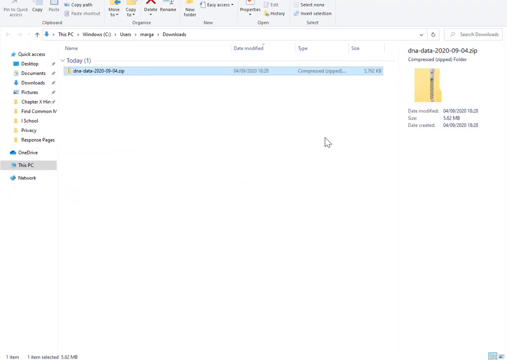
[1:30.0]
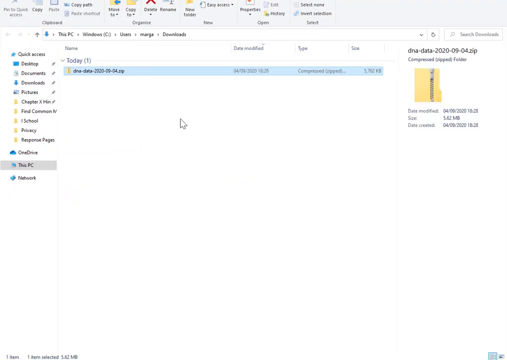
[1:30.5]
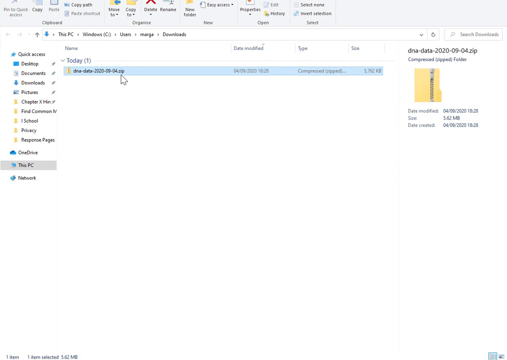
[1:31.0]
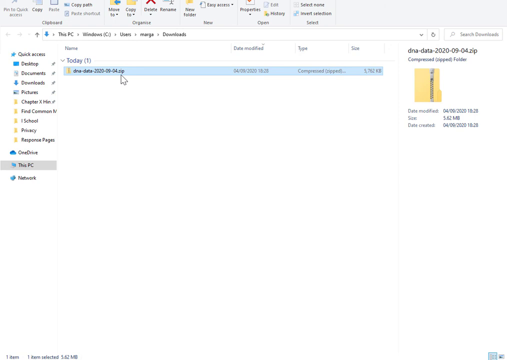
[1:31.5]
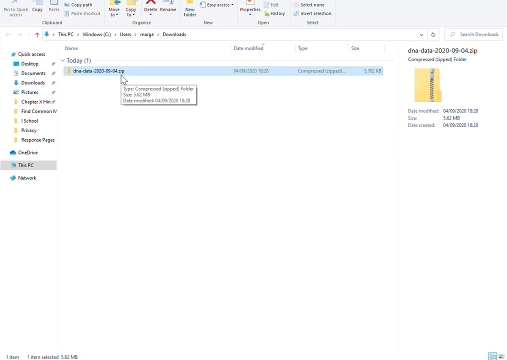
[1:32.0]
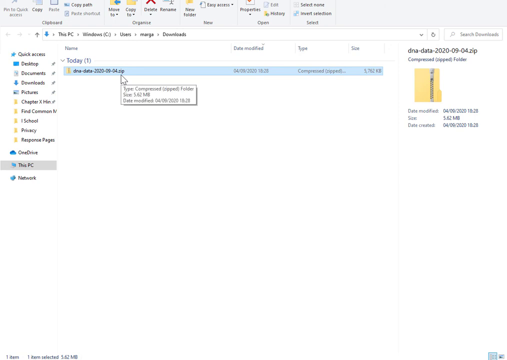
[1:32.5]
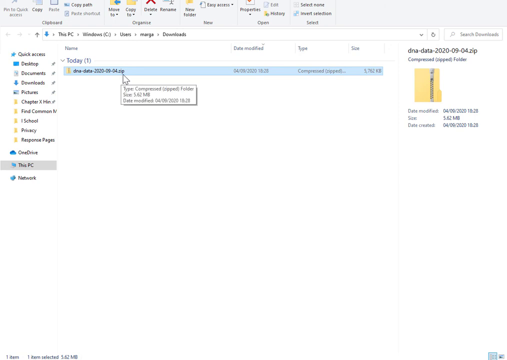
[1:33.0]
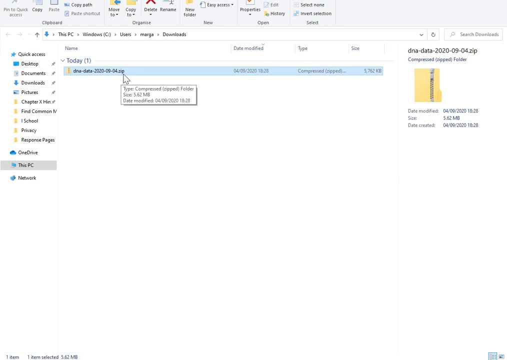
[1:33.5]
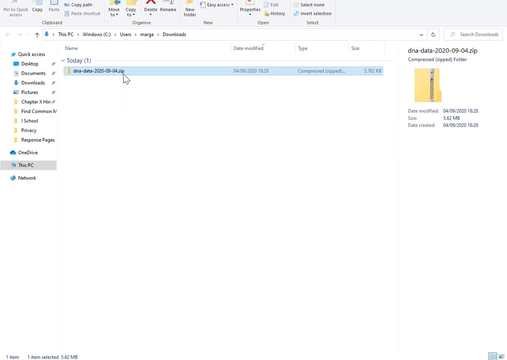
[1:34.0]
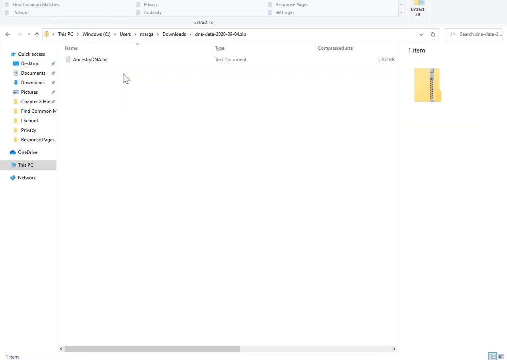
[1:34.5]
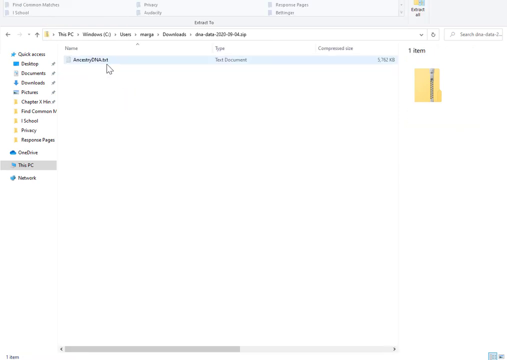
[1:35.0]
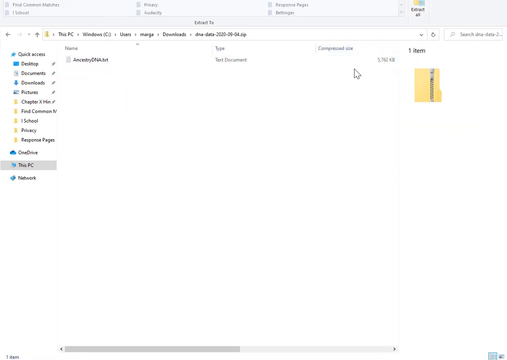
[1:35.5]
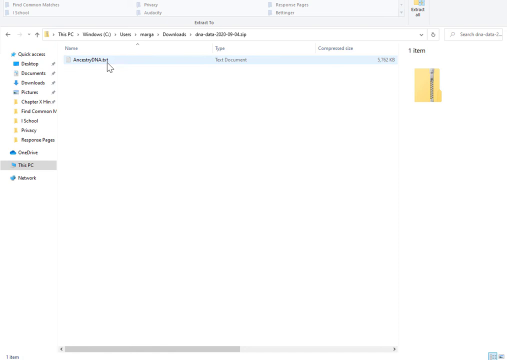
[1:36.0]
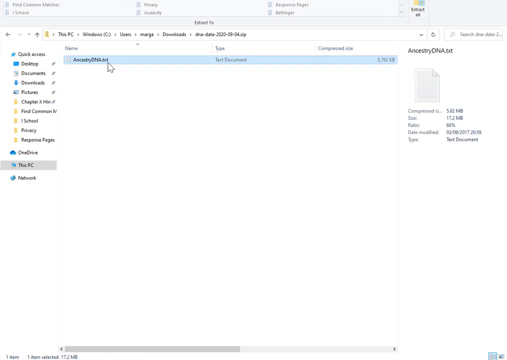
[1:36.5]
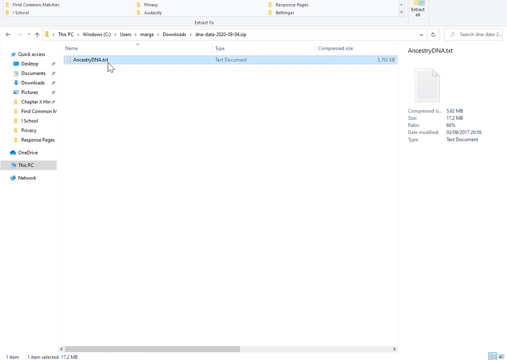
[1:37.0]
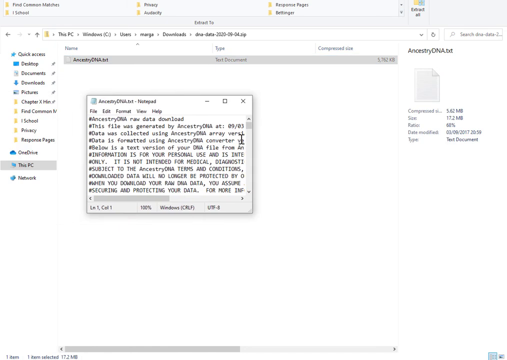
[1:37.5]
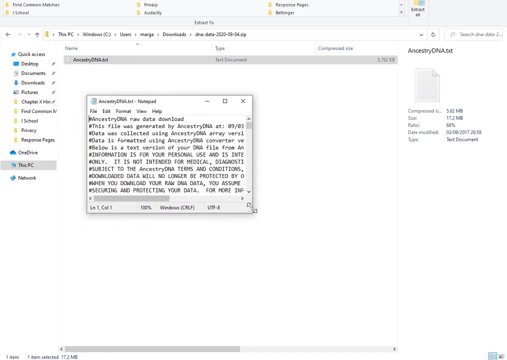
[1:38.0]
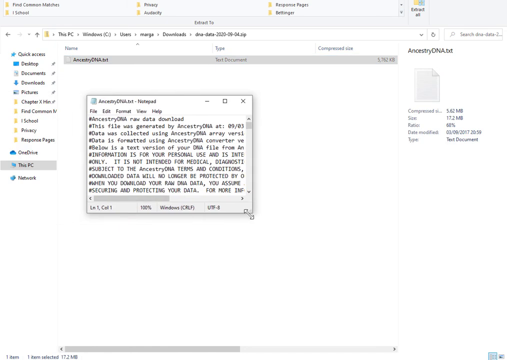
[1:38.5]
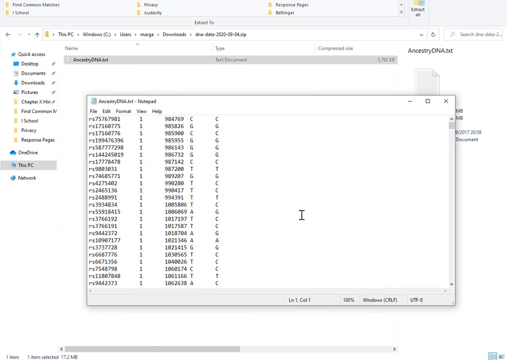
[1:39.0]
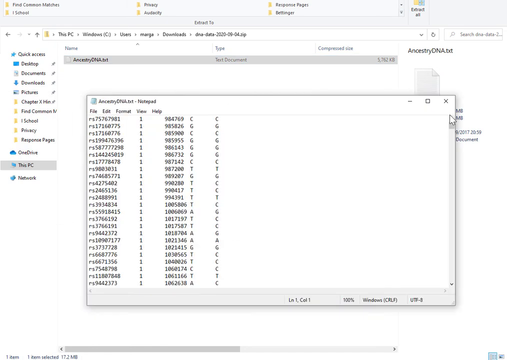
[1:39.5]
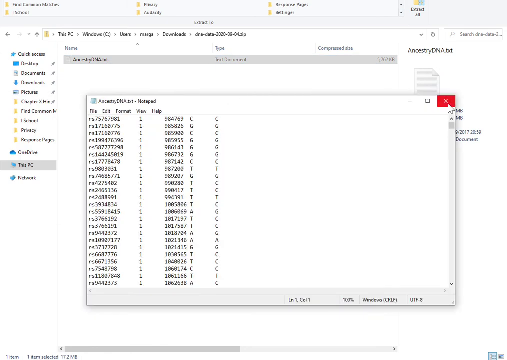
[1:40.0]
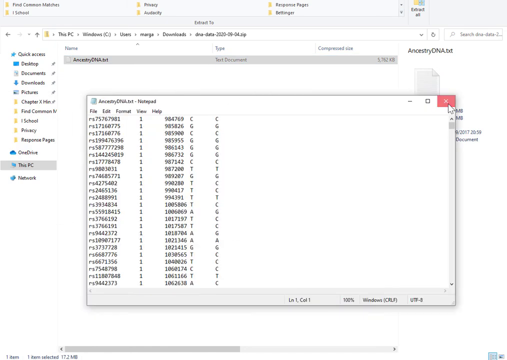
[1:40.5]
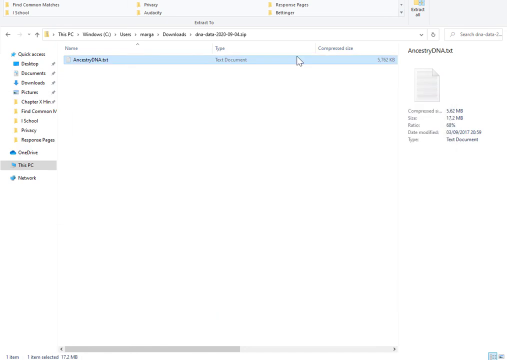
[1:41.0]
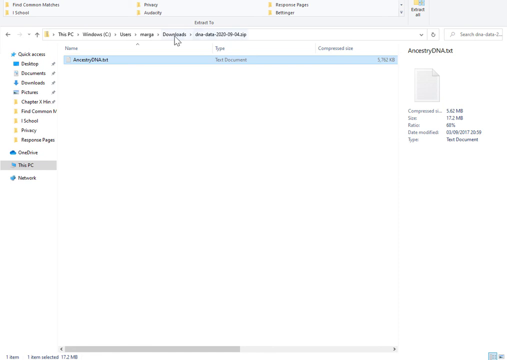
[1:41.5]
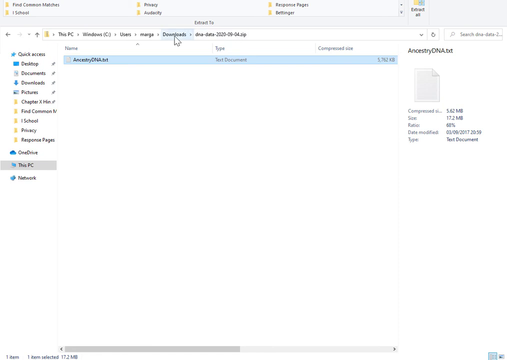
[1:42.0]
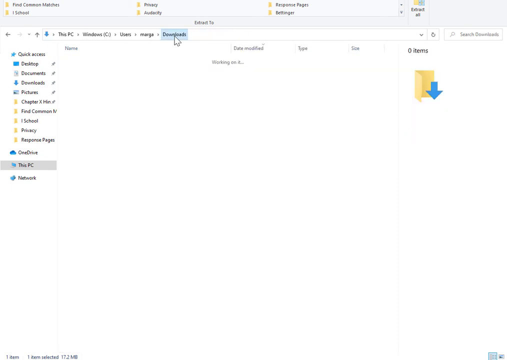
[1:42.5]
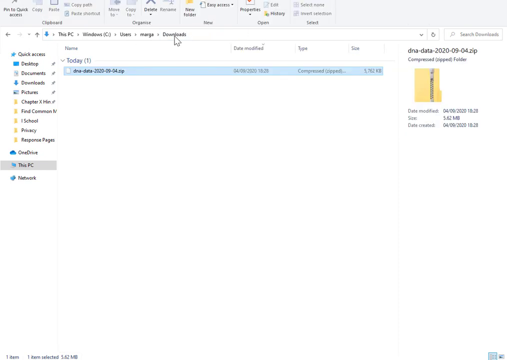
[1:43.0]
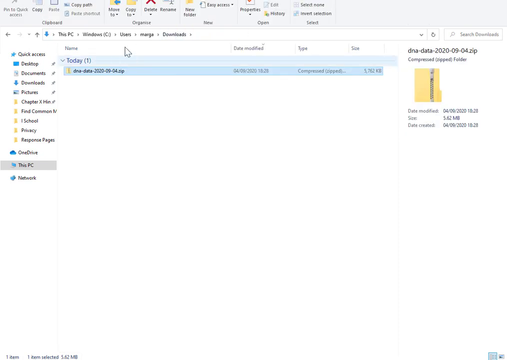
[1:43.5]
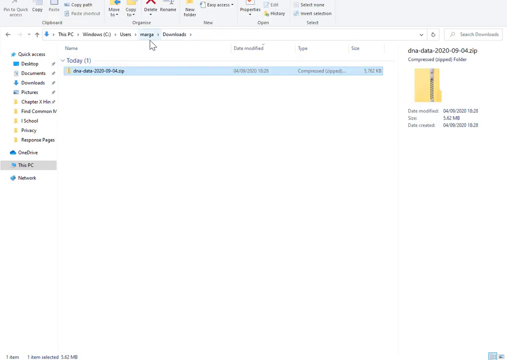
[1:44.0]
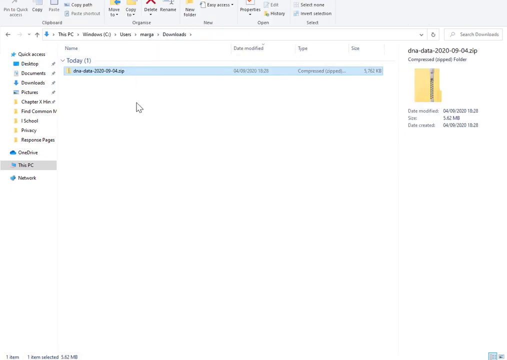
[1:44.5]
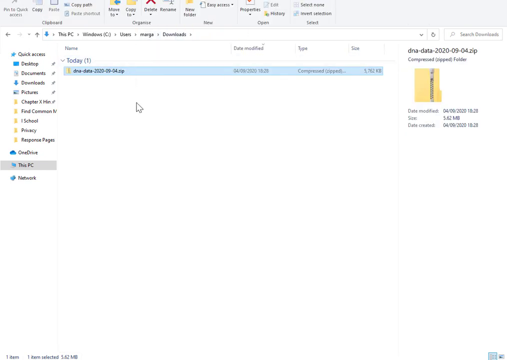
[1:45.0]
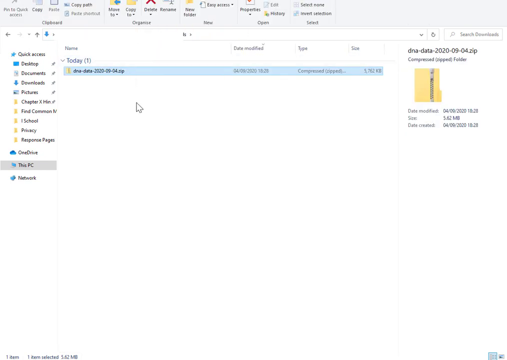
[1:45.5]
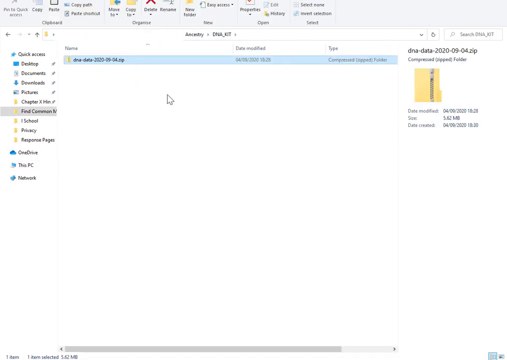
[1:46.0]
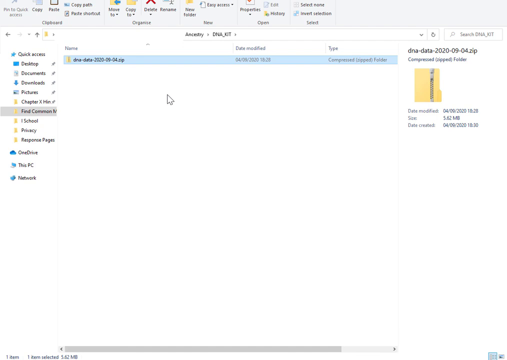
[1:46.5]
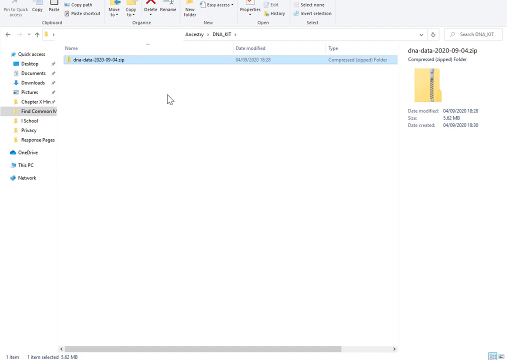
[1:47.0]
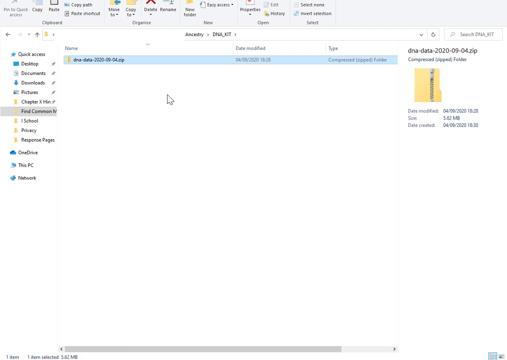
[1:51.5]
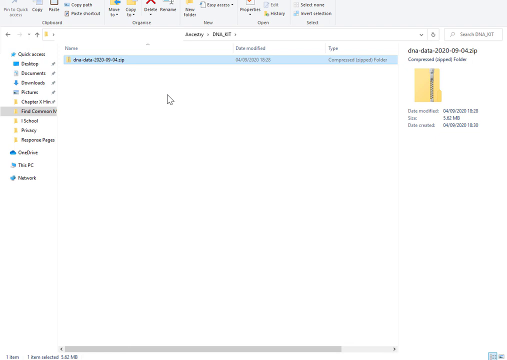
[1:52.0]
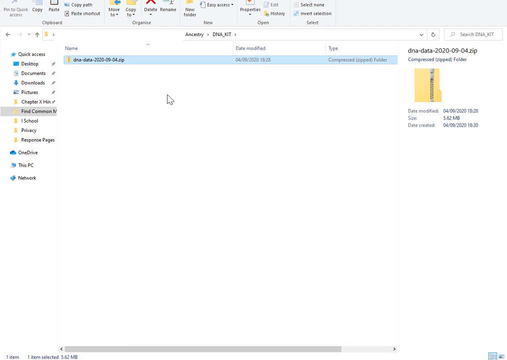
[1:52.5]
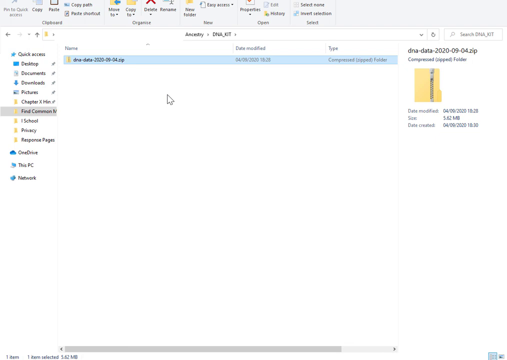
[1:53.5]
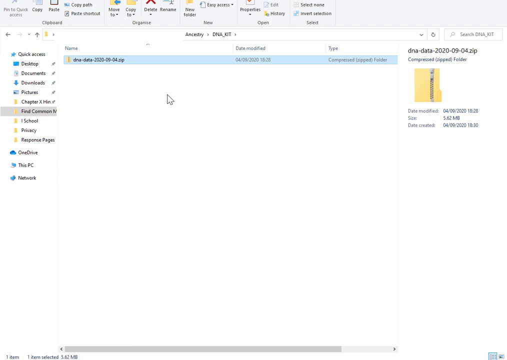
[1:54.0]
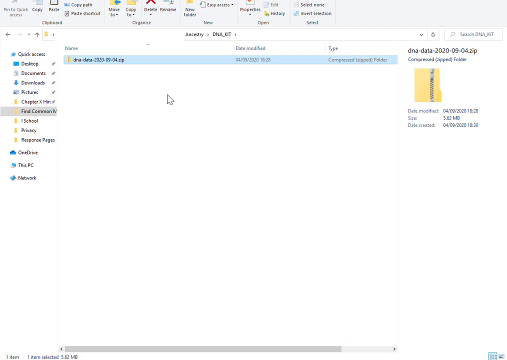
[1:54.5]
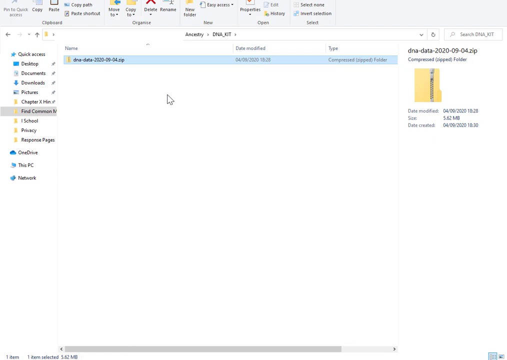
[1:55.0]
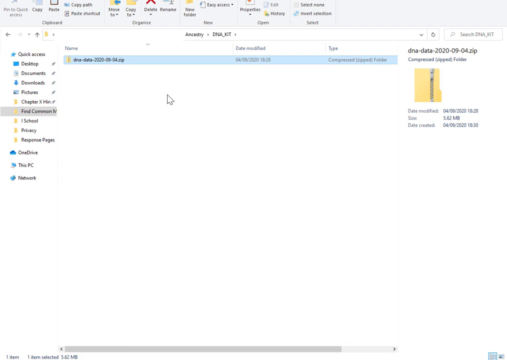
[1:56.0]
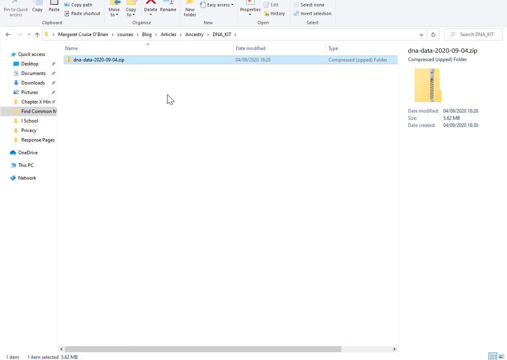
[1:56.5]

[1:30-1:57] A file window shows different options at the very top. A couple are grayed out, including one for quick access and copy, while the paste button is available, with a check mark for paste shortcut. There is a drop-down apparently for move to, and one for copy to, which is blurry and hard to read, as well as an X mark for delete. Underneath, only one file is highlighted: the zip. The right column shows its information with a large zip folder icon, a zipper on the front of a manila folder. The left-hand column lists quick access, desktop, documents, downloads, pictures and a few others, with little thumbnails next to them. At the top right, right above where it says DNA data zip folder with the large folder icon, is a "search downloads" text field.